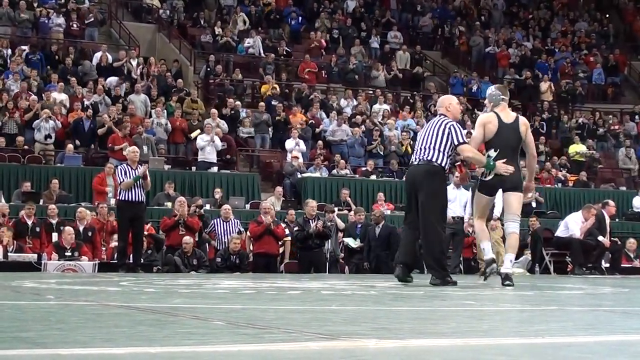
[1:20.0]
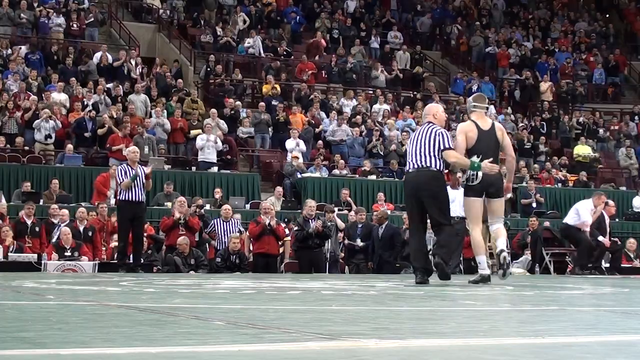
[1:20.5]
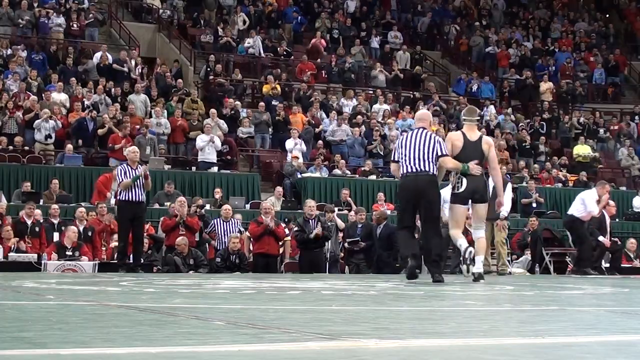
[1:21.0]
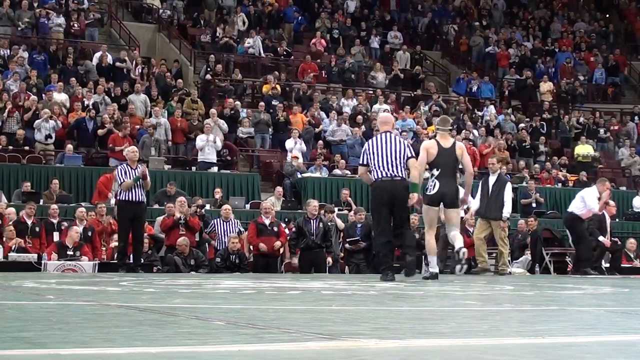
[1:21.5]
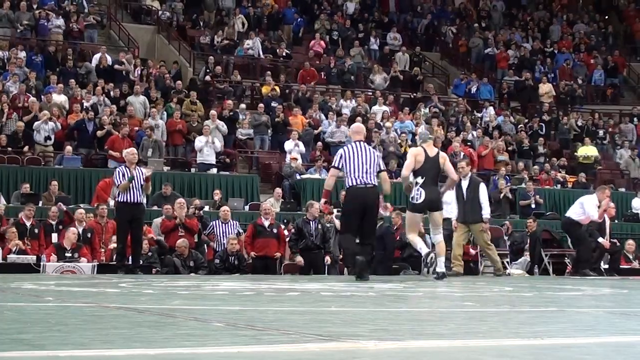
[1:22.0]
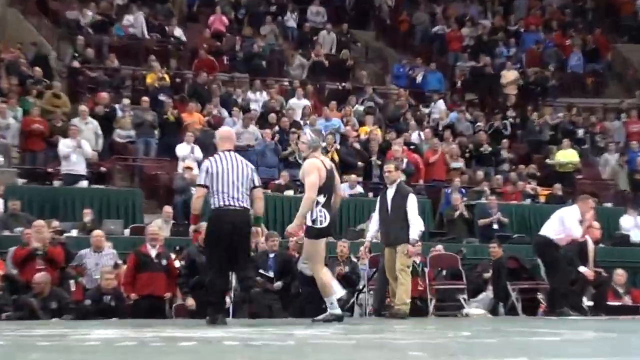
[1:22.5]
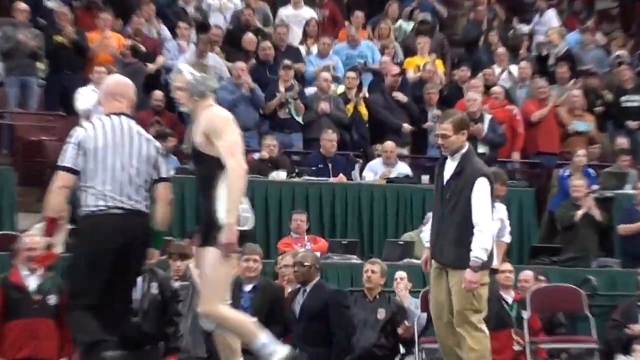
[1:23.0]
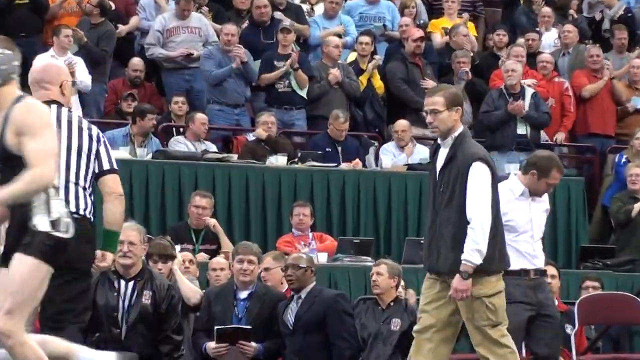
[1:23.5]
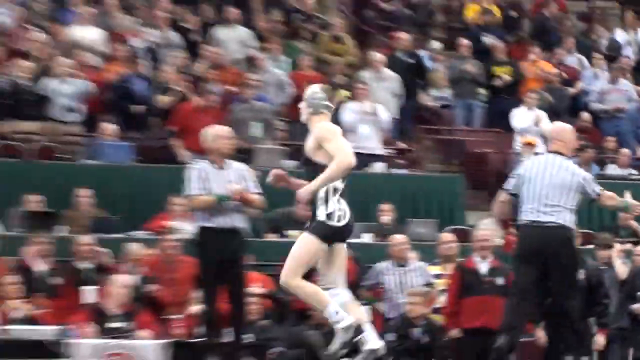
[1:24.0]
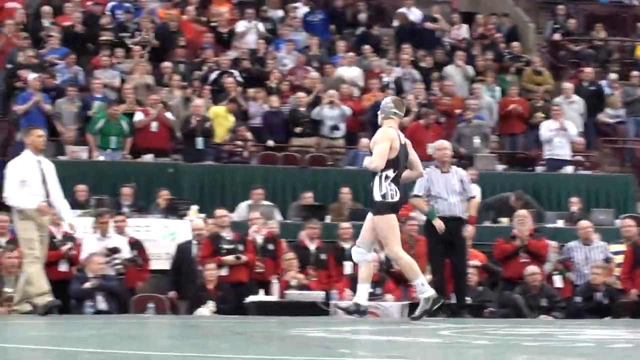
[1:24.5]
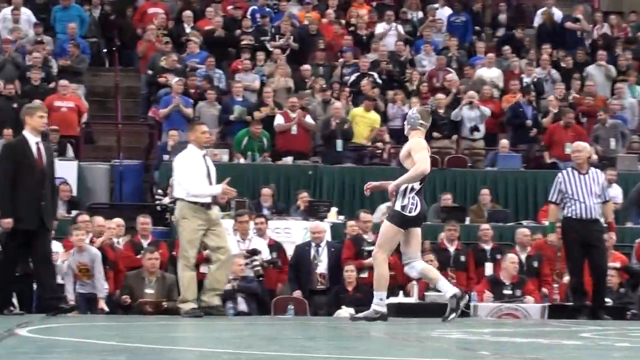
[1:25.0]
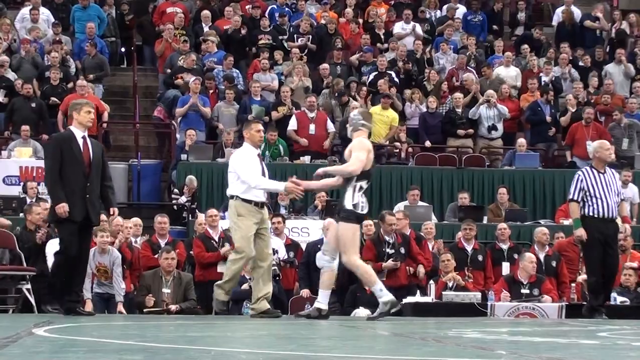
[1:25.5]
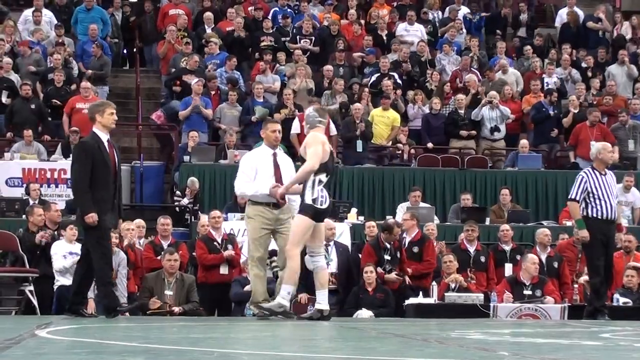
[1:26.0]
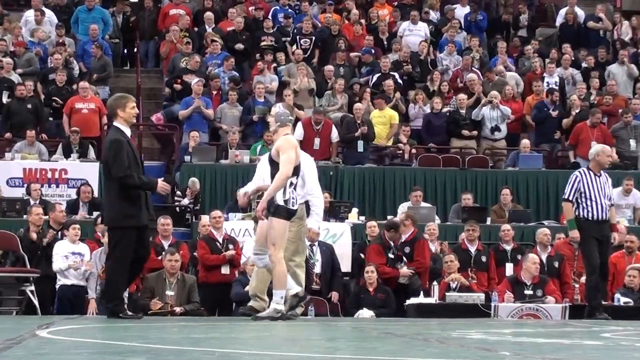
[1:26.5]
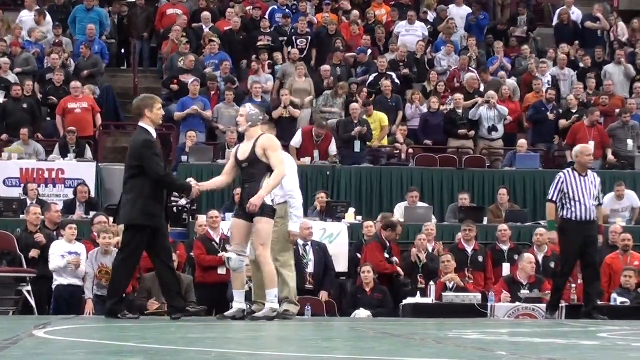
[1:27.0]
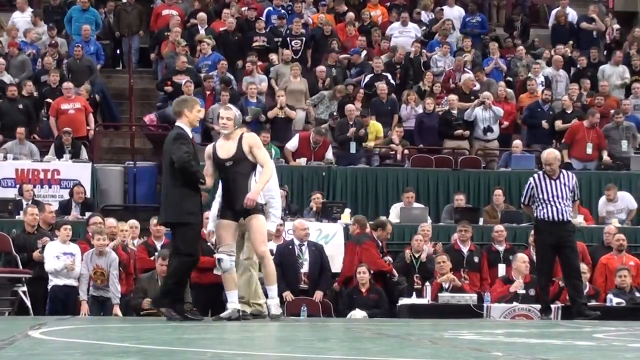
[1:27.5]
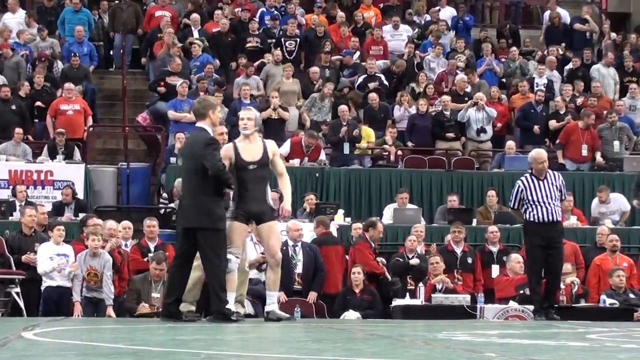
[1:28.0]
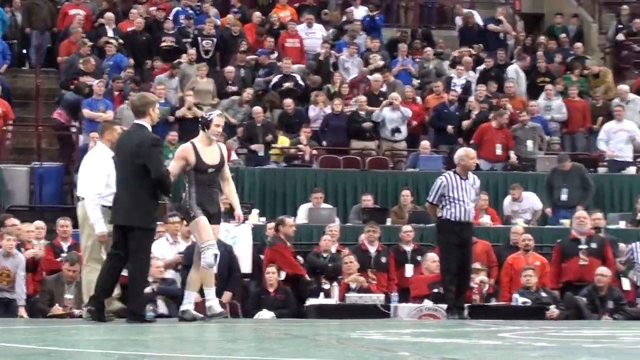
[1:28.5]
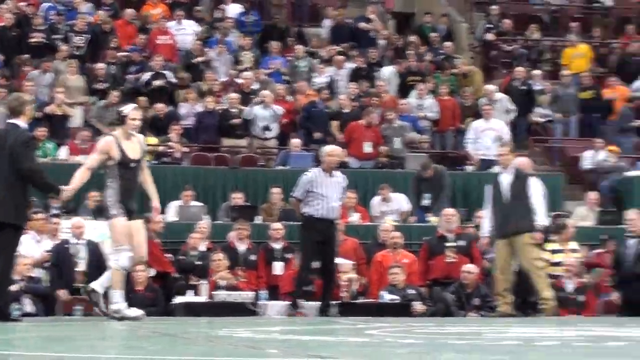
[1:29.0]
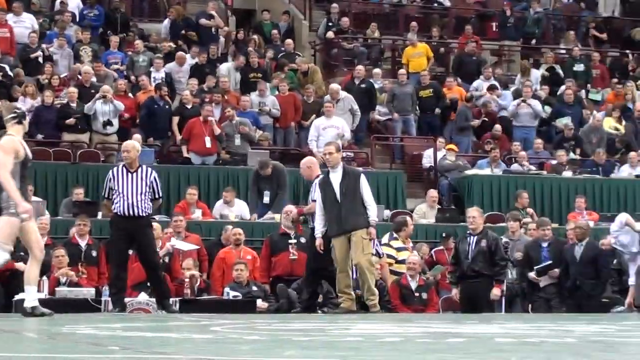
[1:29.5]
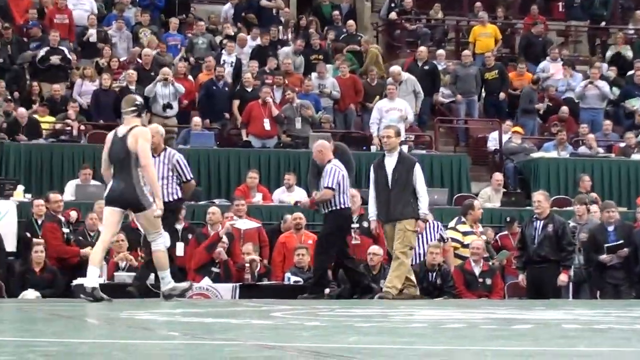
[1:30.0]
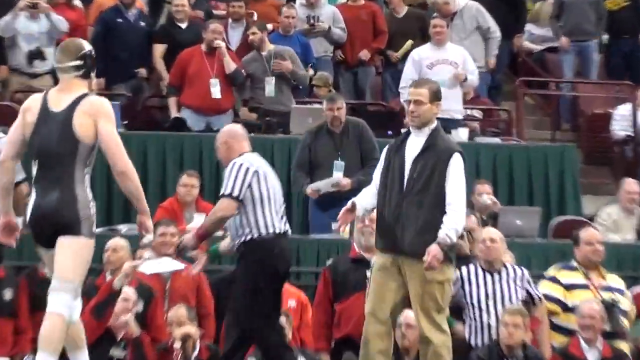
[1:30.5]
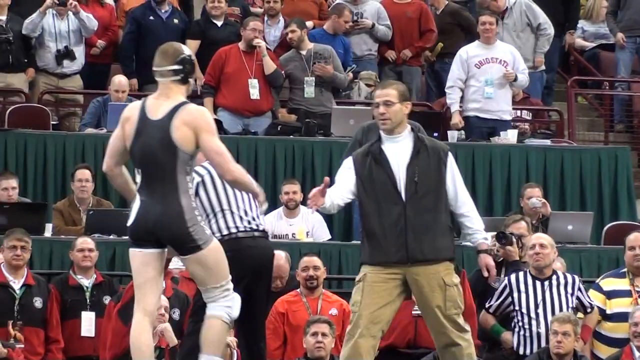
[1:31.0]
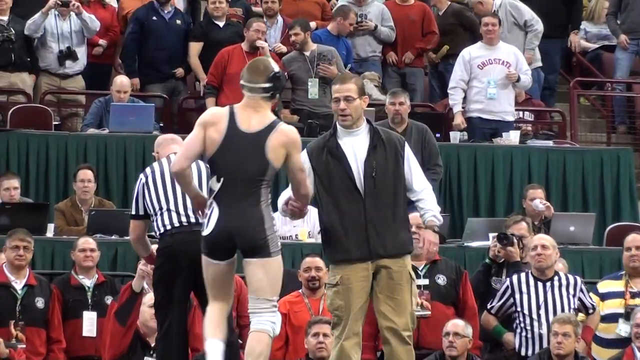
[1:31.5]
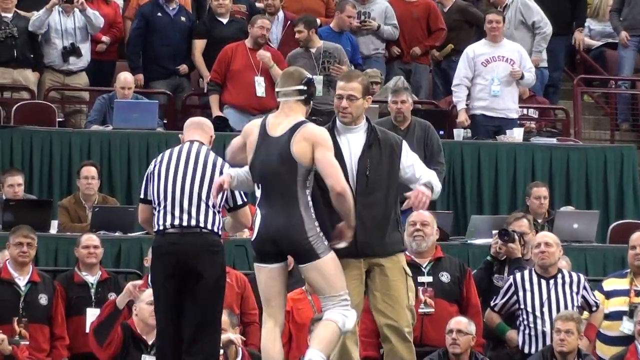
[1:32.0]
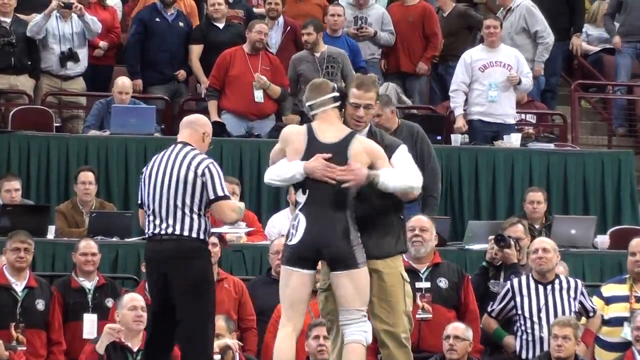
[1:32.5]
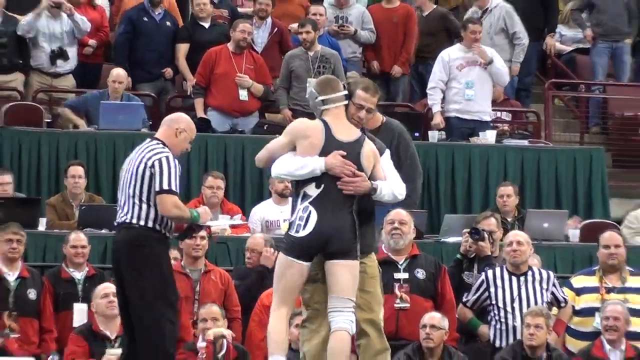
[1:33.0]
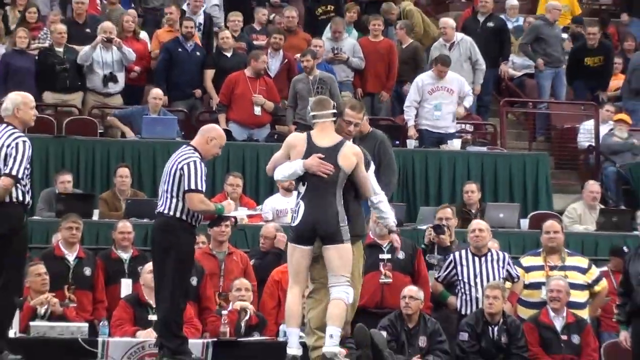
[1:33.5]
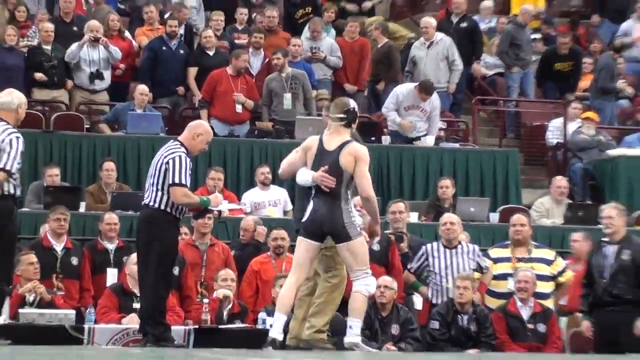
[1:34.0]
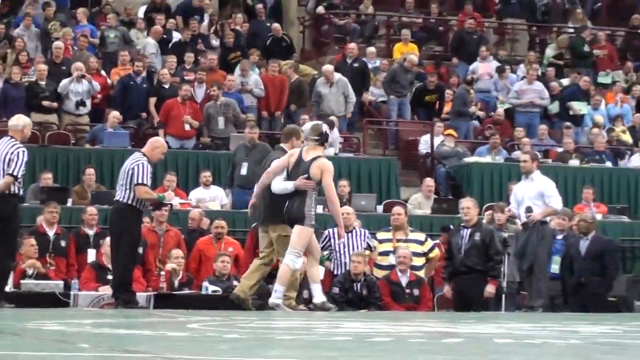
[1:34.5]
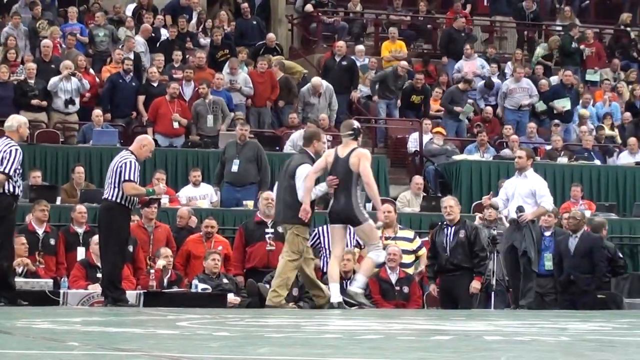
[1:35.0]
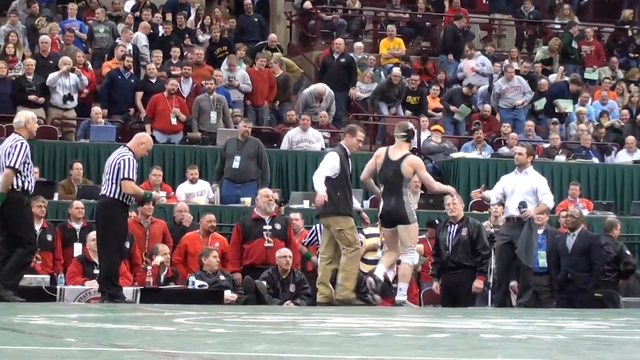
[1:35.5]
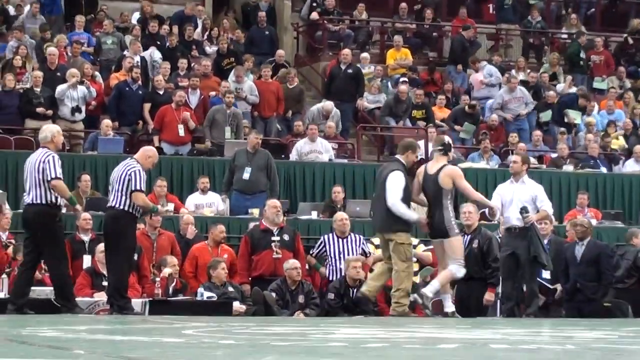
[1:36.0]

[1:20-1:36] The wrestler in black begins to walk off the mat toward the seats or the sidelines, then makes a sudden left turn and walks toward the coach's corner. One by one he shakes their hands: first a man in a suit, then another in a gray vest and khakis, and finally a third wearing a button-down shirt and holding a sports coat. Each handshake lingers for a second, with direct eye contact, a nod and maybe a quiet word. In the background, one of the referees is clapping while another stands off to the side, still observing.